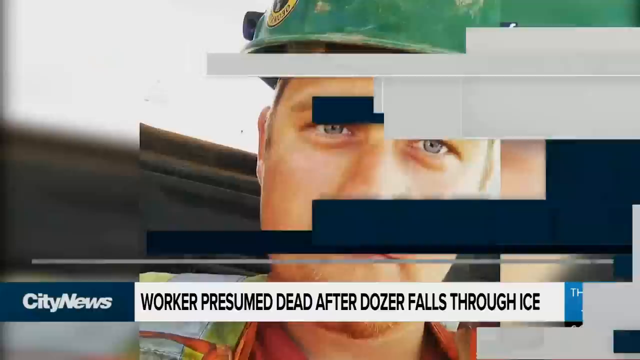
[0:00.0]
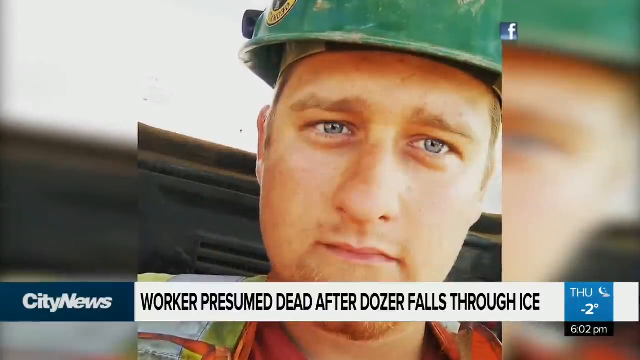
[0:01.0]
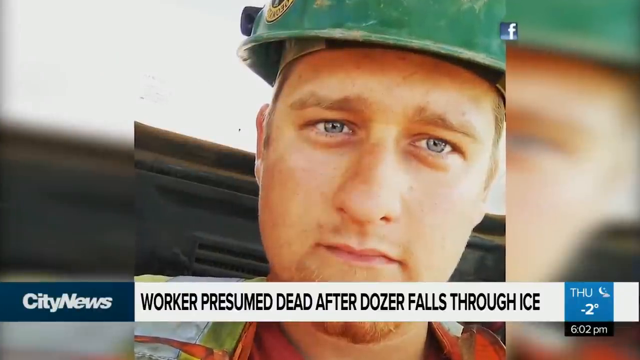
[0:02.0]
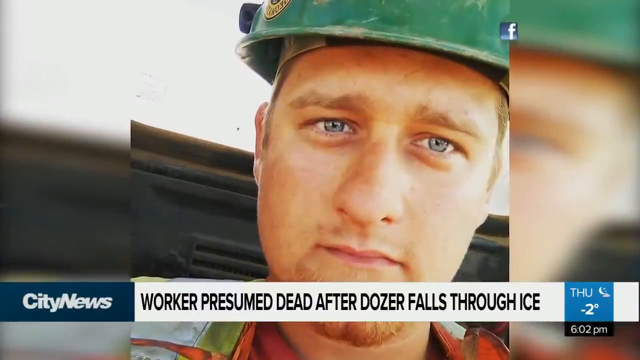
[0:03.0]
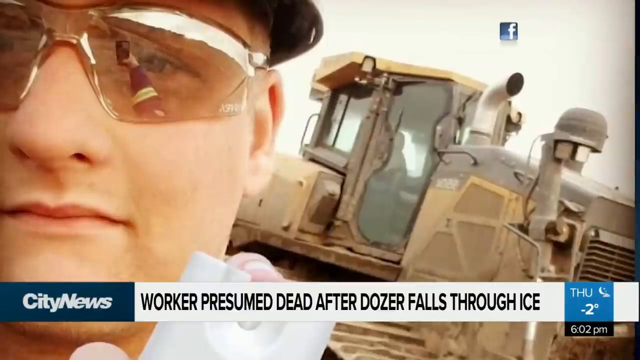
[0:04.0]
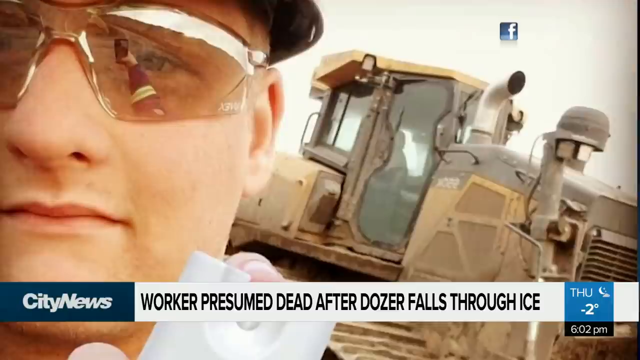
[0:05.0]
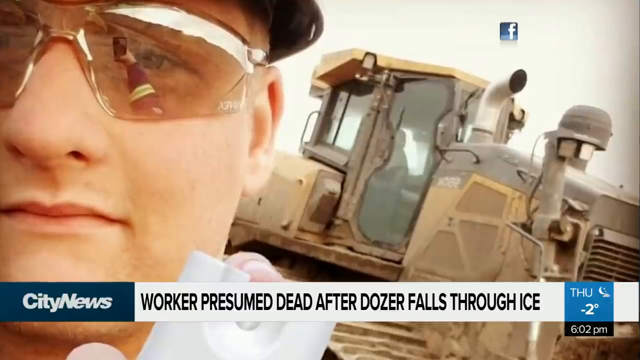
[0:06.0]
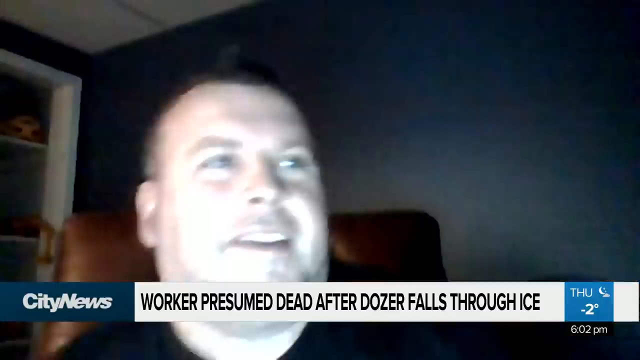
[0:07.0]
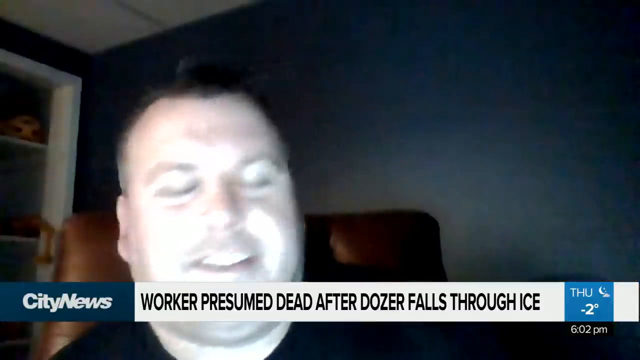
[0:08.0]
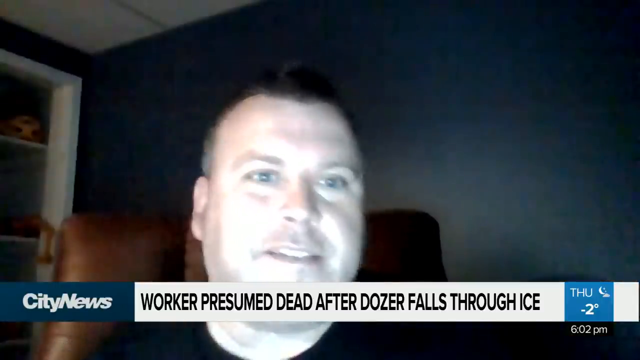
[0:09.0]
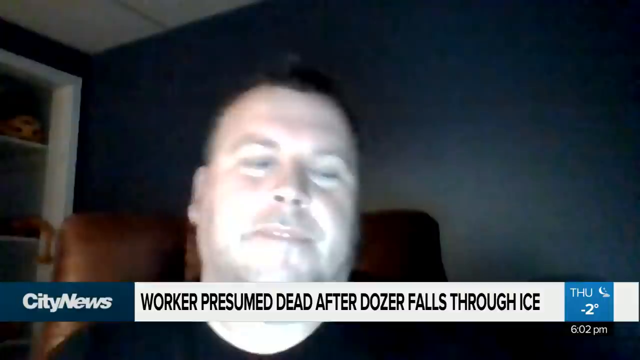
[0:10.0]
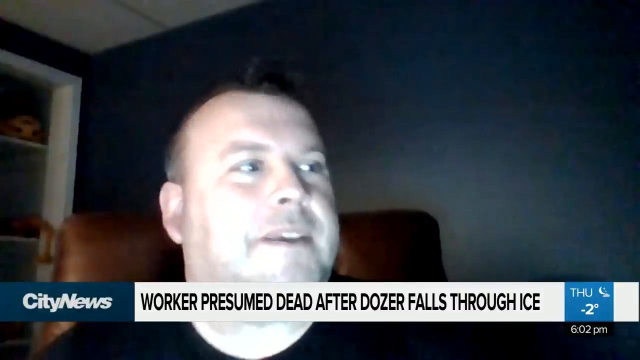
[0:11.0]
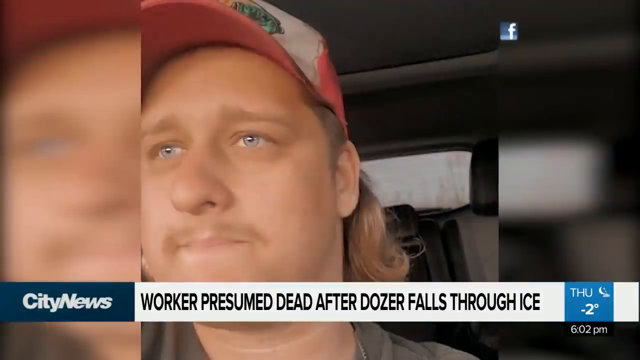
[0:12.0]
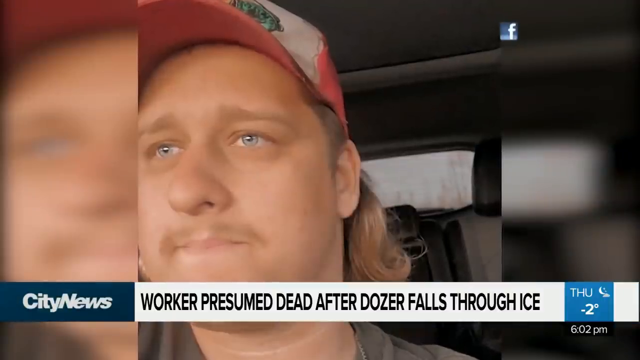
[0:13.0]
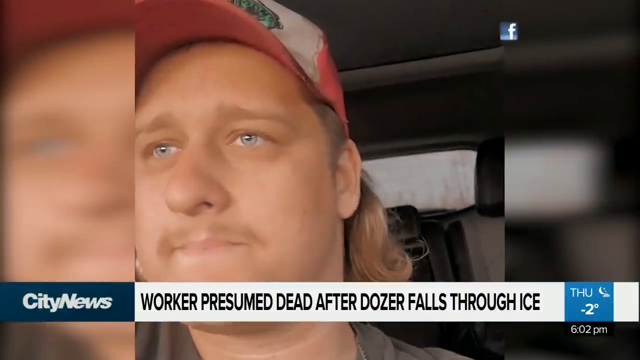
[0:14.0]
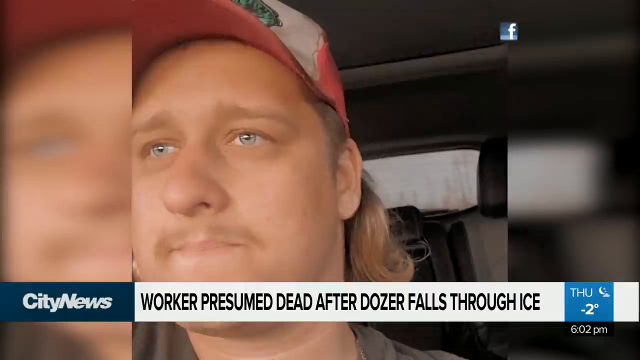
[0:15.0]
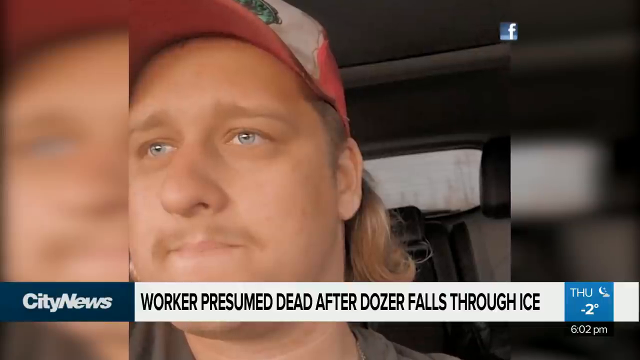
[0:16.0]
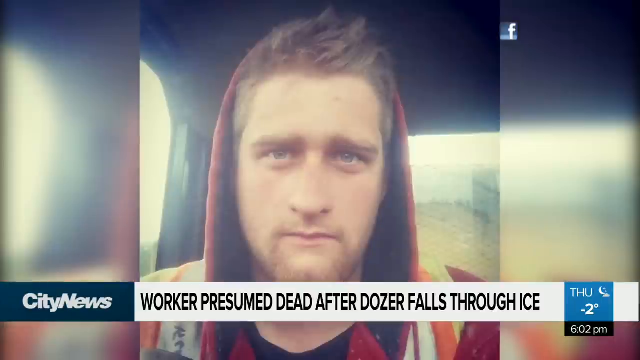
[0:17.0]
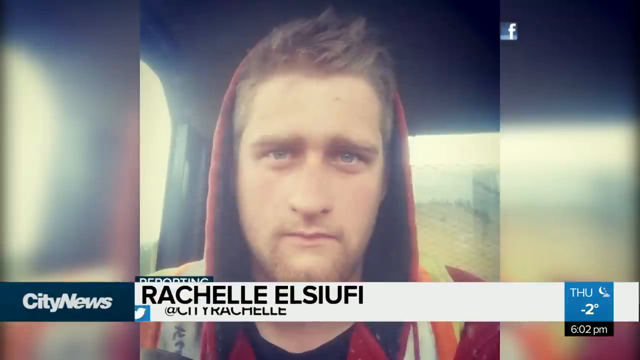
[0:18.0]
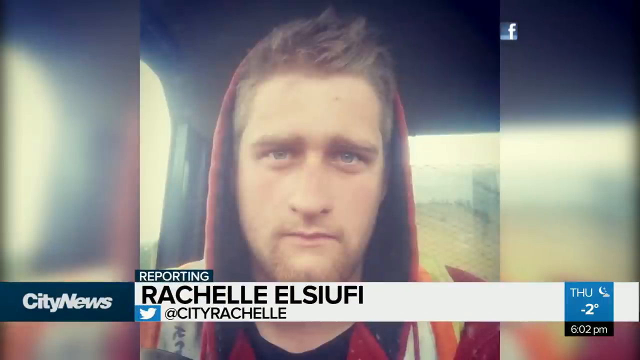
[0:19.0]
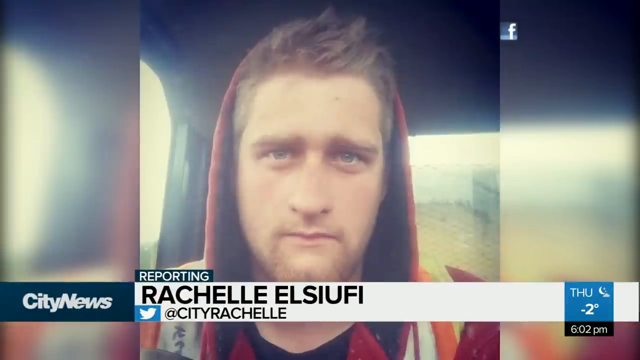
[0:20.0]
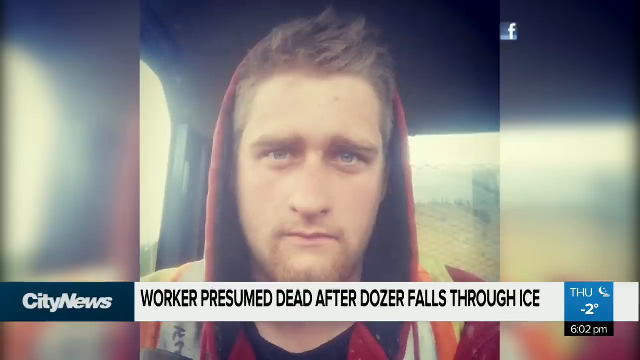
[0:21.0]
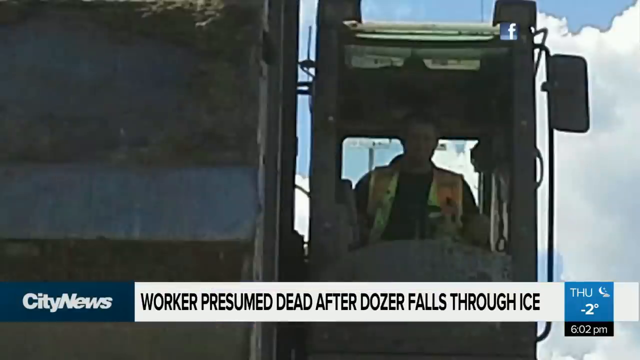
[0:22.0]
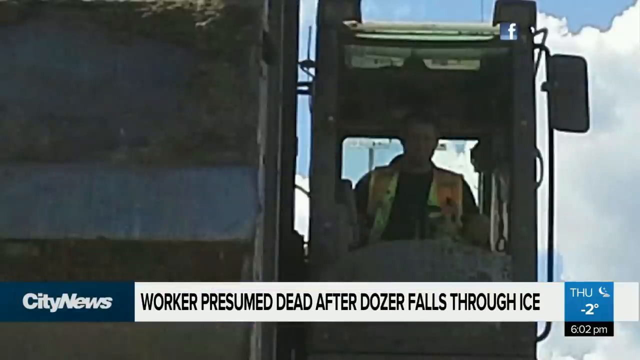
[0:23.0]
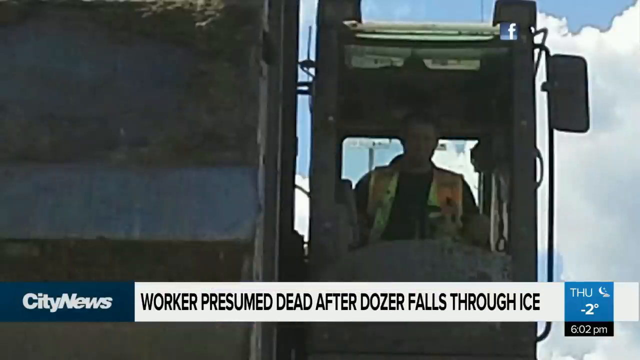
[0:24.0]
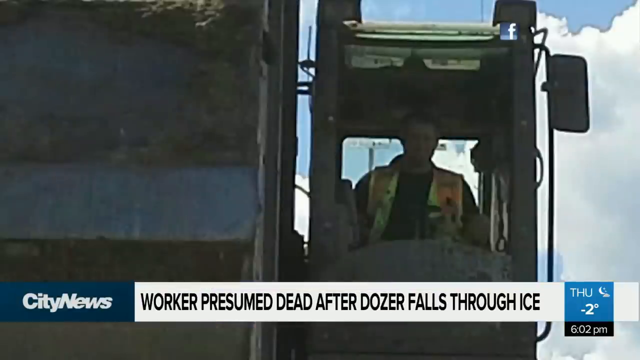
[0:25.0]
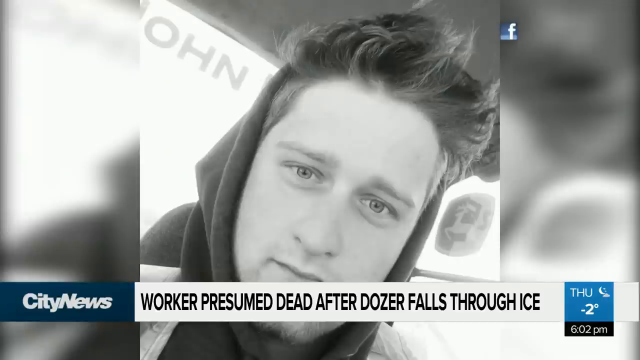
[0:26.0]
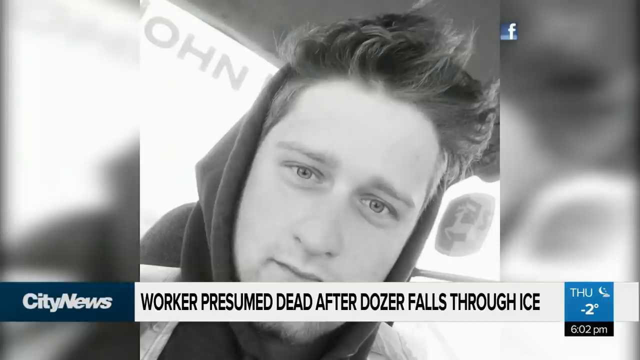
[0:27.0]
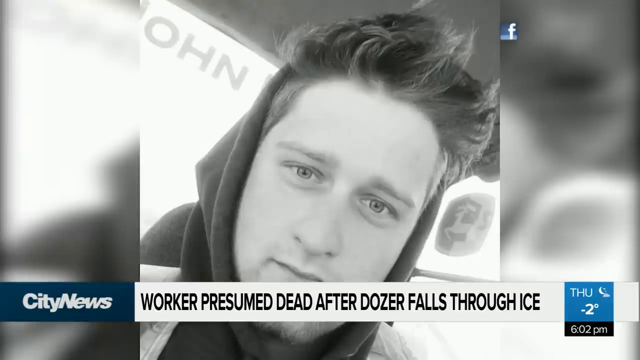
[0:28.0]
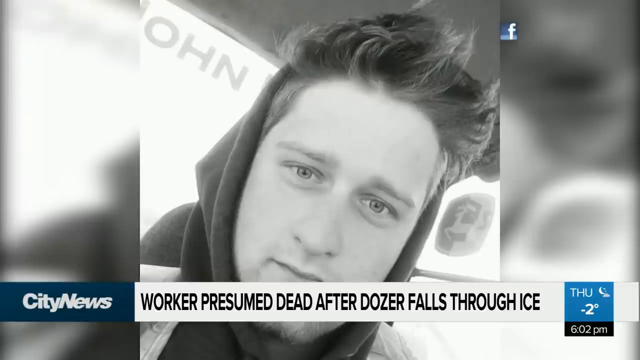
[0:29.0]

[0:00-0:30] A City News story appears, with a white box at the bottom of the screen reading in black letters "worker presumed dead after dozer falls through ice." The City News logo is in the bottom left corner, and the bottom right corner shows that it is Thursday, negative 2 degrees and 6.02pm. The graphic shows a blonde, blue-eyed boy wearing a green construction helmet. It switches to a picture of him in a hard hat taking a selfie, then to a man being interviewed by the news station over a Skype call, with a blue painted wall behind him. More pictures of the worker from Facebook follow: one in a white and red trucker hat, and the next in a hoodie that is also red. On-screen text gives the reporter as Rochelle Esufi. Another Facebook picture shows him wearing a hoodie, and another shows him on his bulldozer.